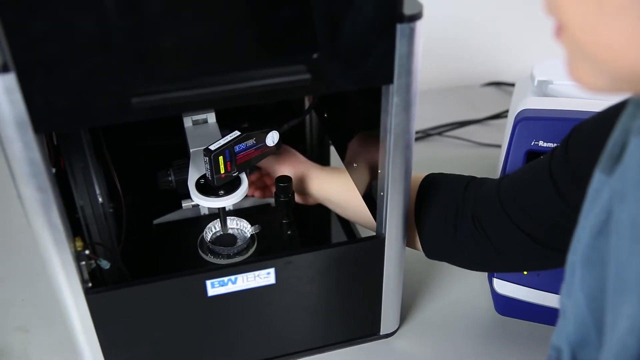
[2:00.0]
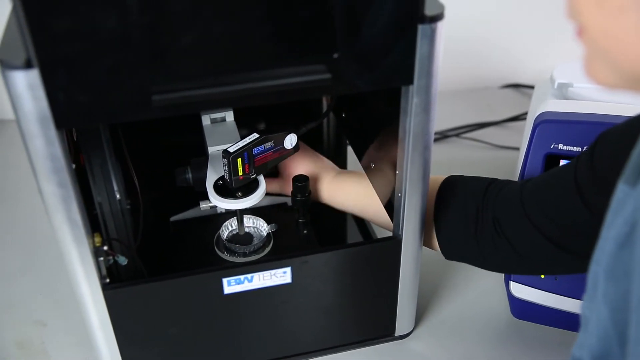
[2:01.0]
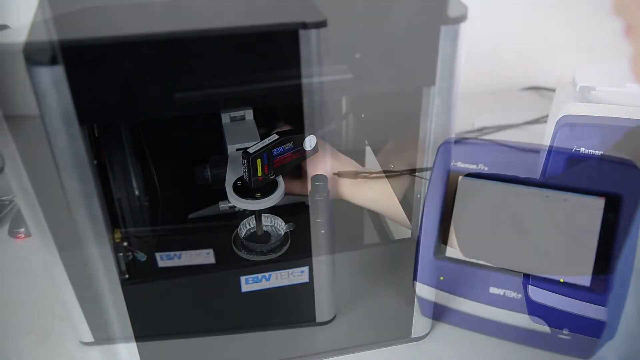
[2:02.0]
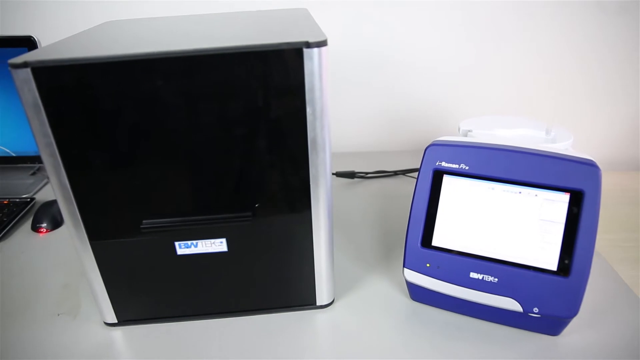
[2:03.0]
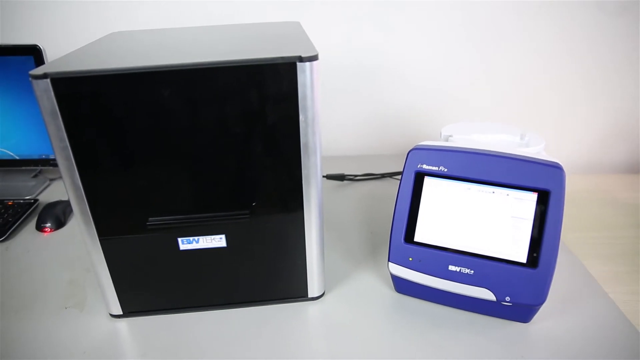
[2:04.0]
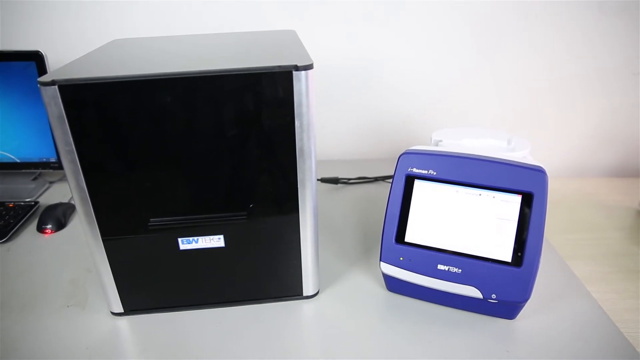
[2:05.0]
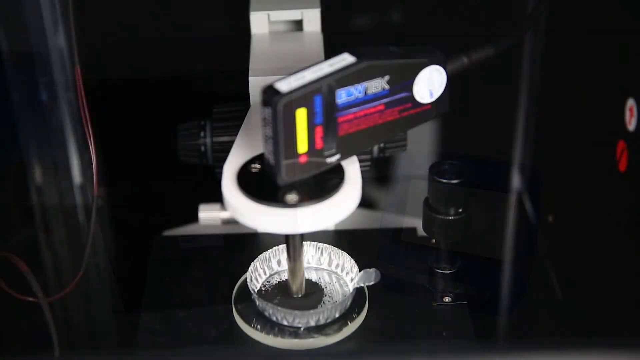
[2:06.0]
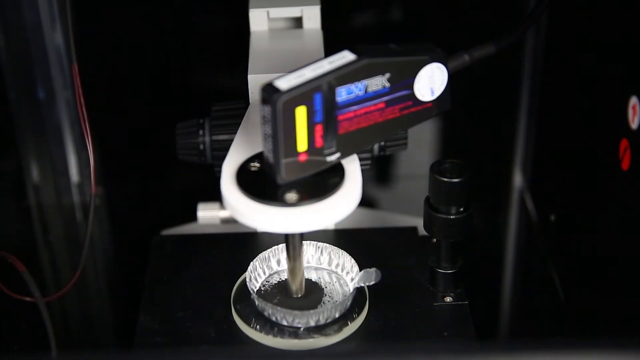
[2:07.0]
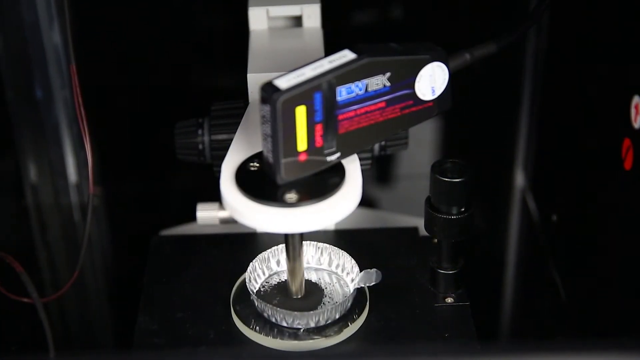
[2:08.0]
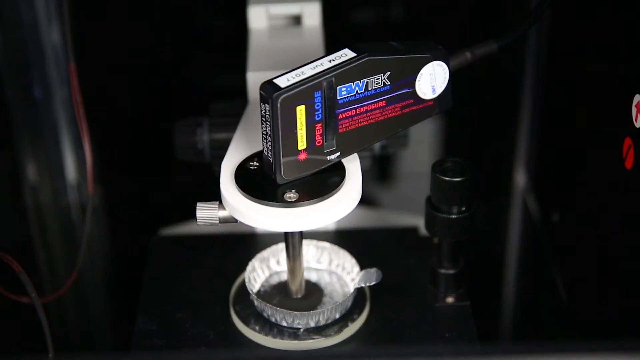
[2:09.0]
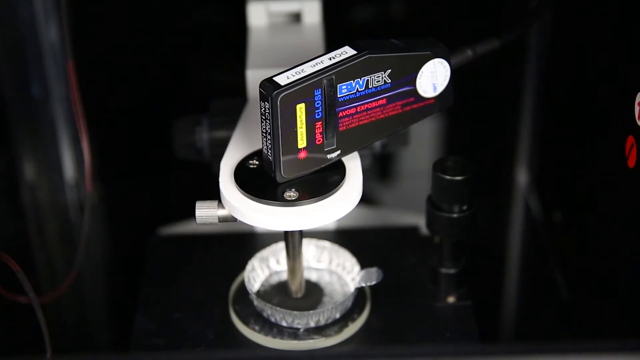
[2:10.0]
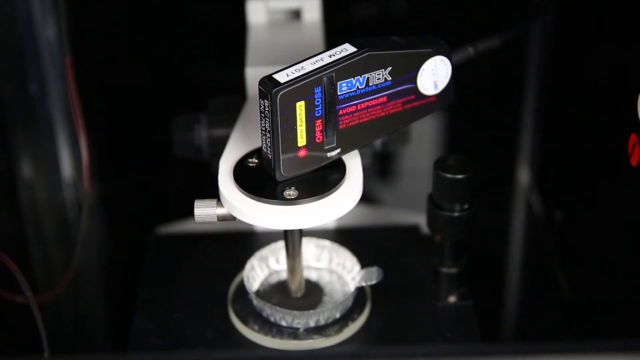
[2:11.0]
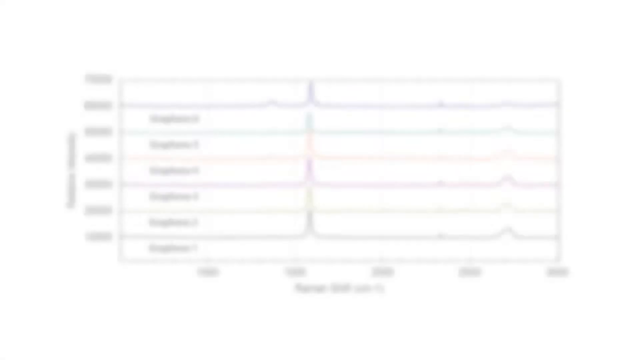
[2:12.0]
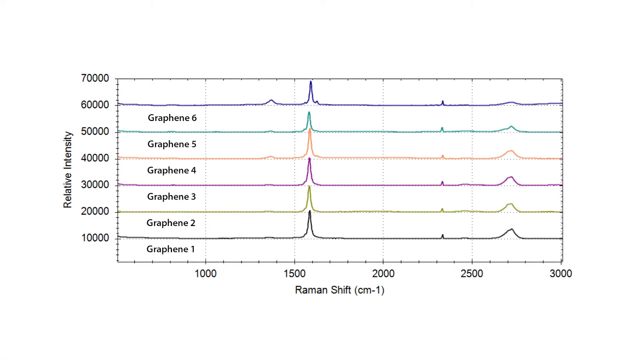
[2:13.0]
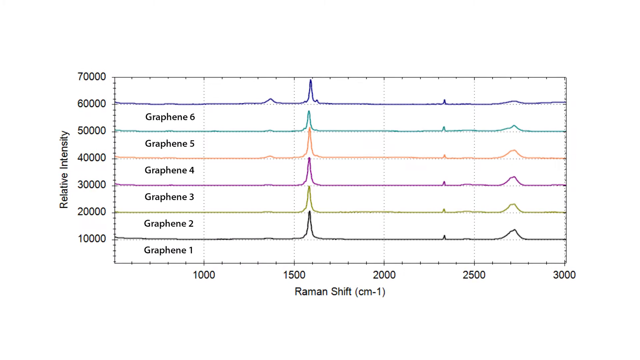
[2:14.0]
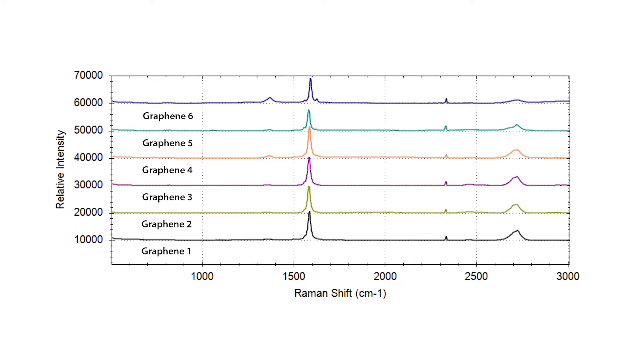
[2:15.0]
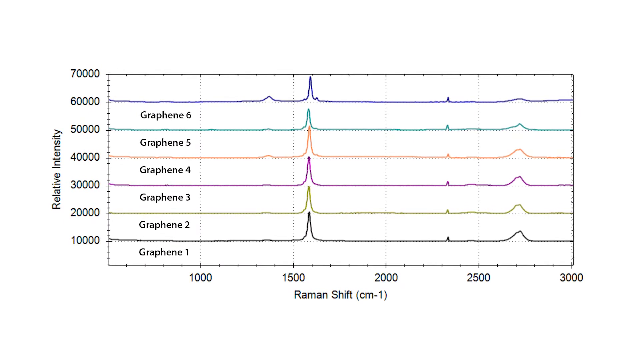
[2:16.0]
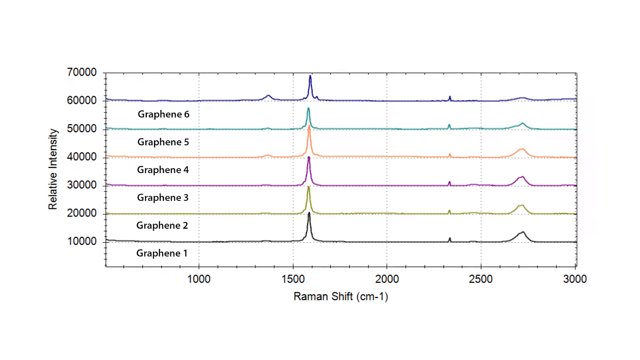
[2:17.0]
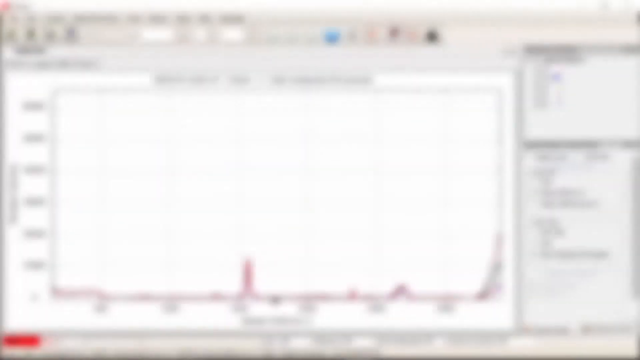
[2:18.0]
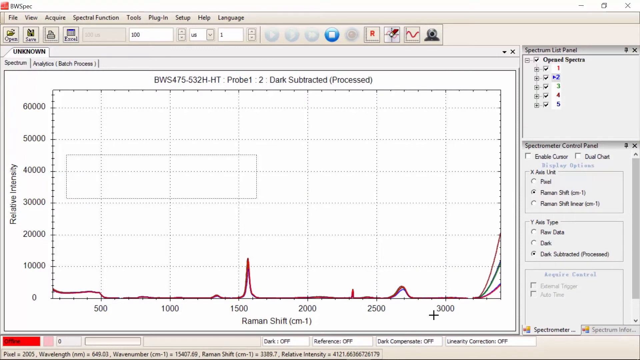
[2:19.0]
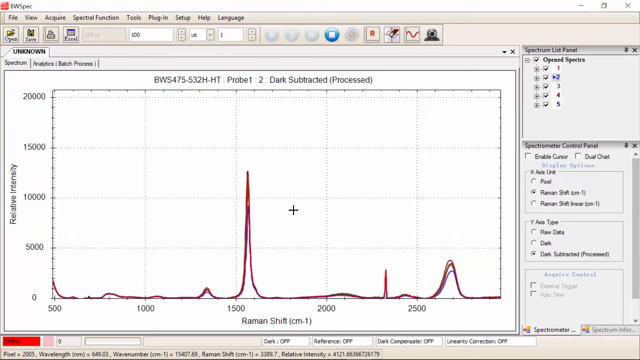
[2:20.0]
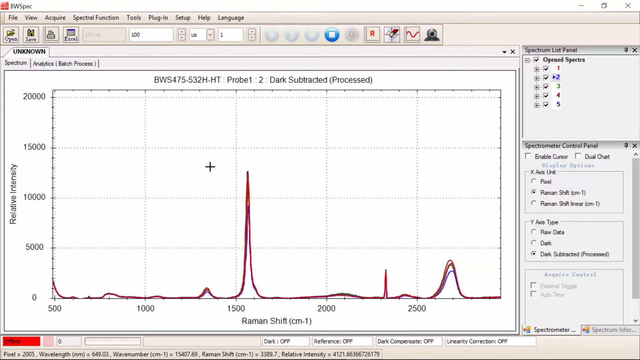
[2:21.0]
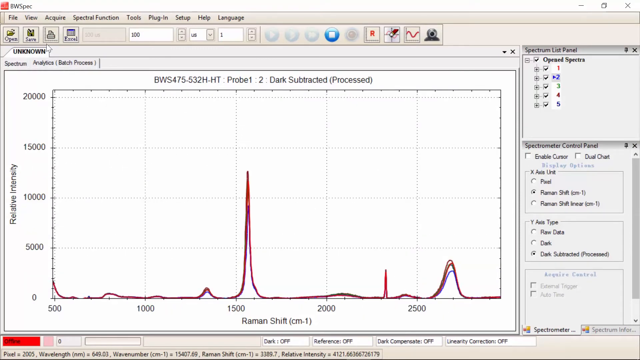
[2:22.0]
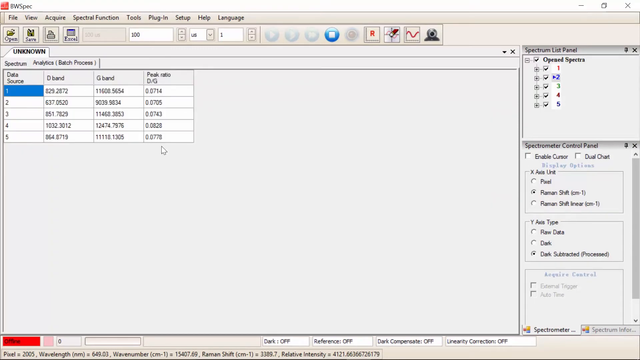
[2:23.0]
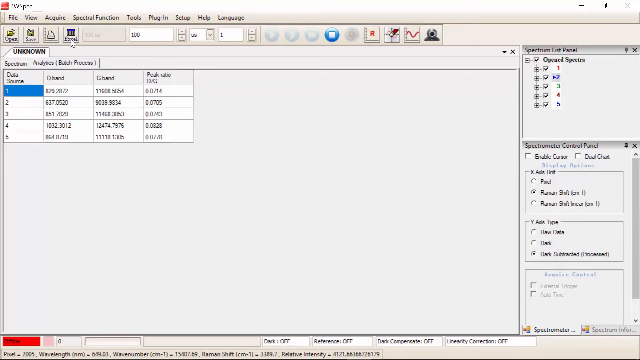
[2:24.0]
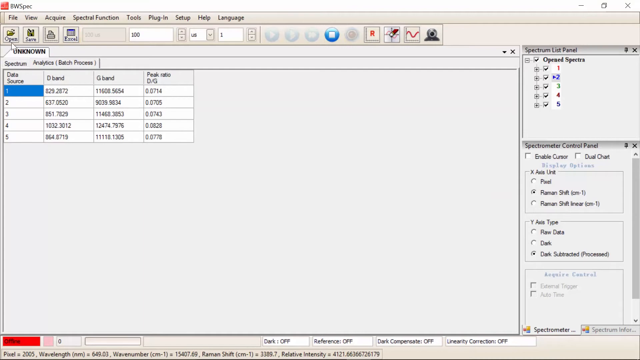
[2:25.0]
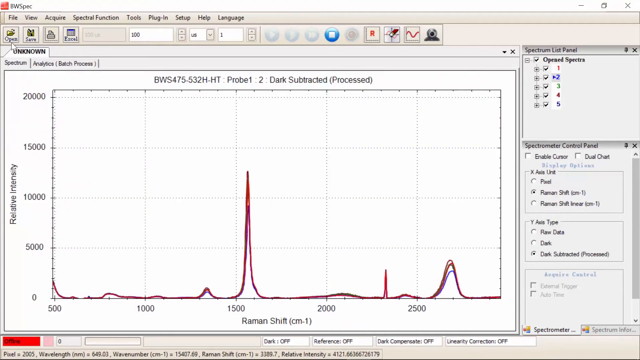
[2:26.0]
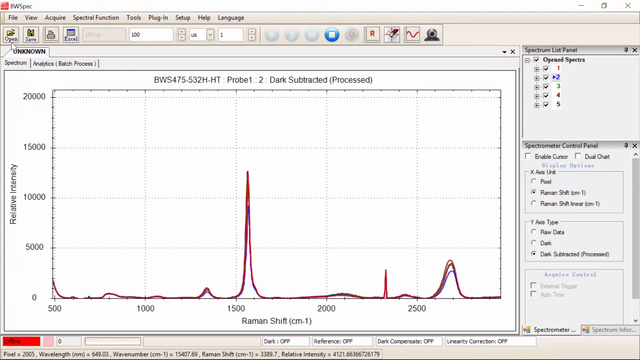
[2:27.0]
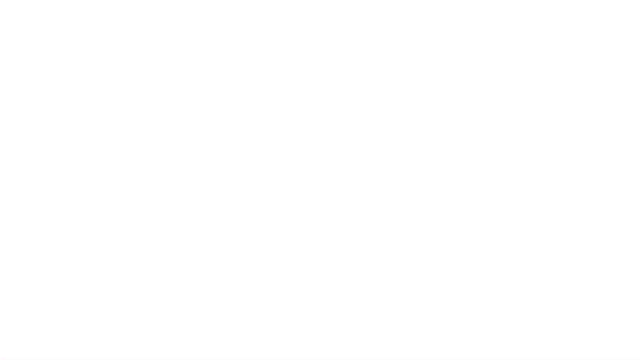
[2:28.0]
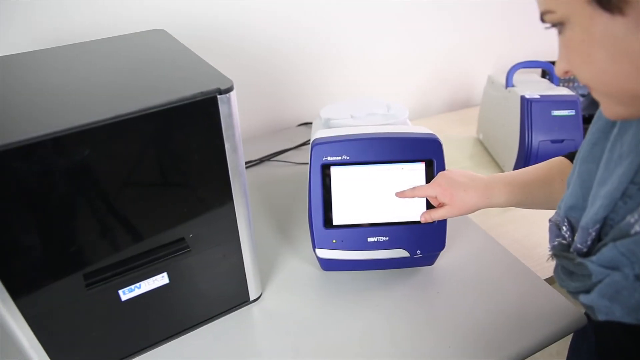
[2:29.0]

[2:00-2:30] A person wearing a black t-shirt spins part of the mechanism inside the open black machine, apparently lowering part of its center with a knob. The camera angle changes, he disappears, and only the black machine is shown, now with its door closed and the square blue machine still to its right. The angle changes again and the camera zooms in inside the black machine, showing a mechanism that looks like a black battery attached to a white platform, with a black disc inside. There is writing on the battery in blue and red, in very small text. Next, a graph shows six lines, with the same x- and y-axis labels as before. Then a computer briefly generates graph lines from a data table chart.